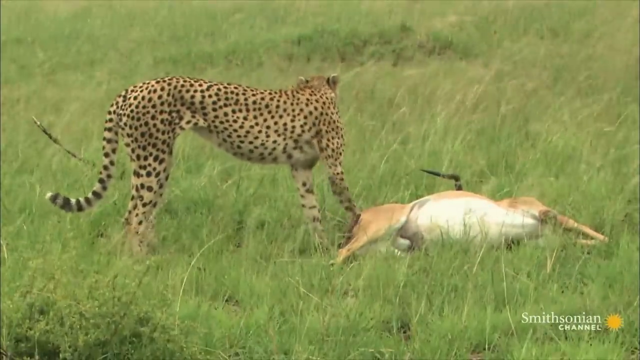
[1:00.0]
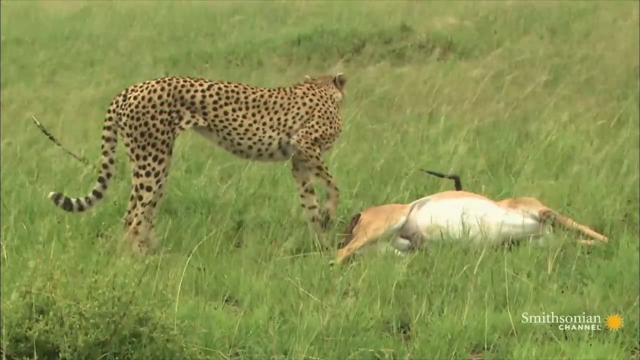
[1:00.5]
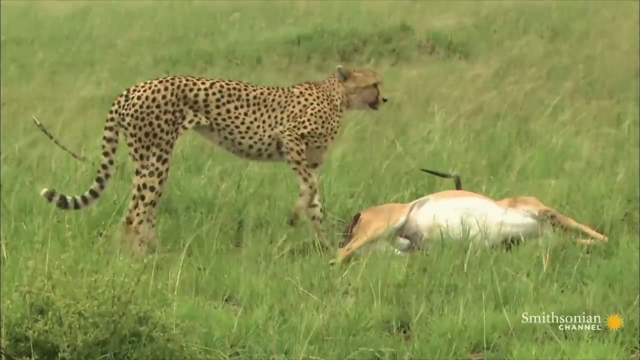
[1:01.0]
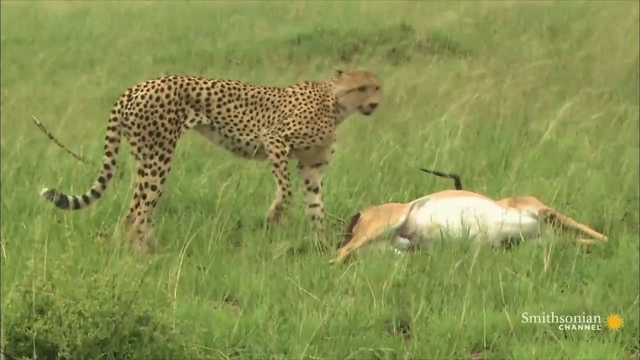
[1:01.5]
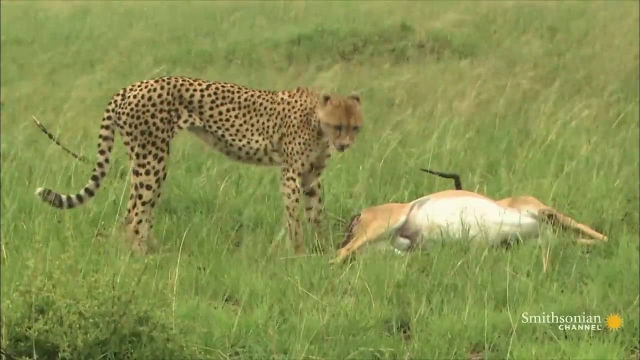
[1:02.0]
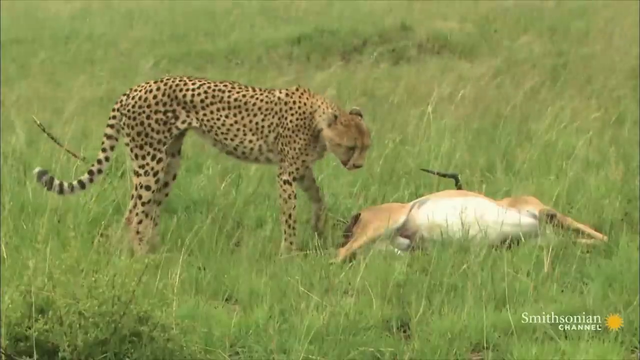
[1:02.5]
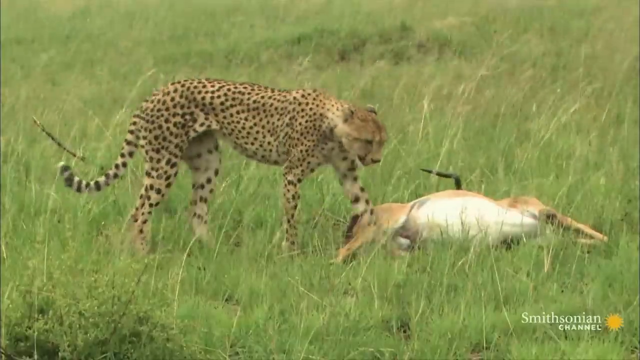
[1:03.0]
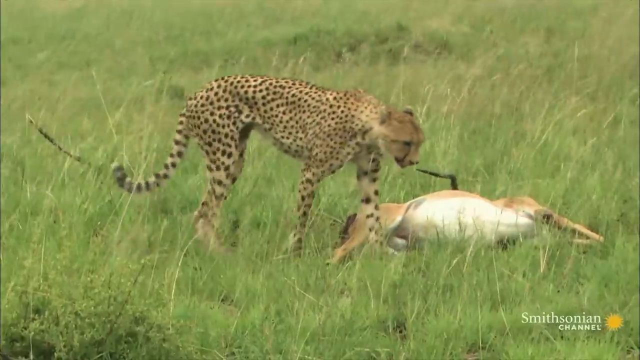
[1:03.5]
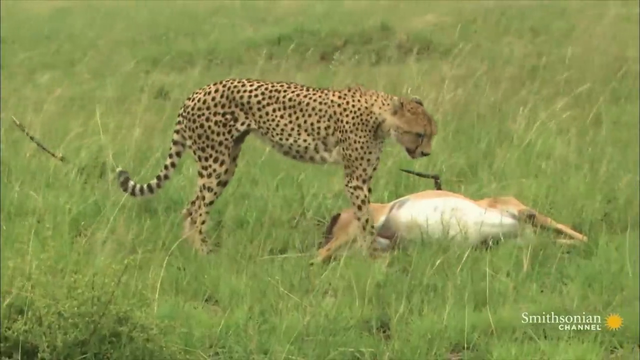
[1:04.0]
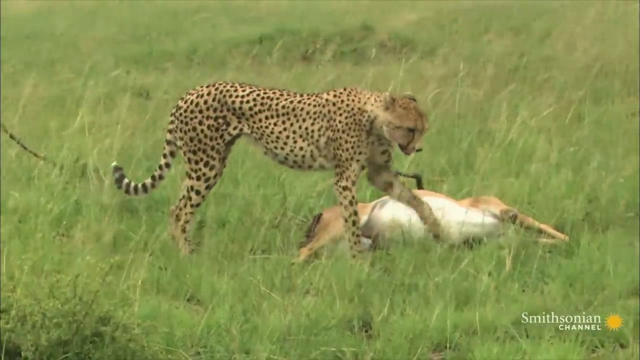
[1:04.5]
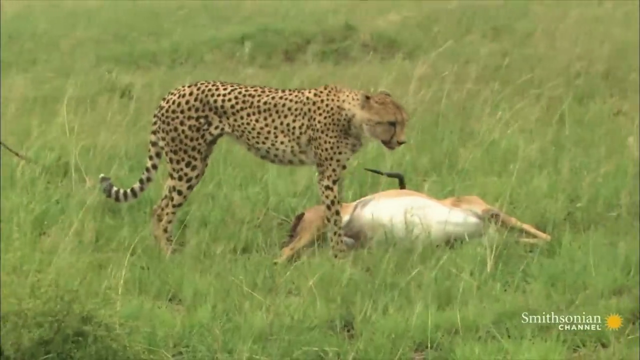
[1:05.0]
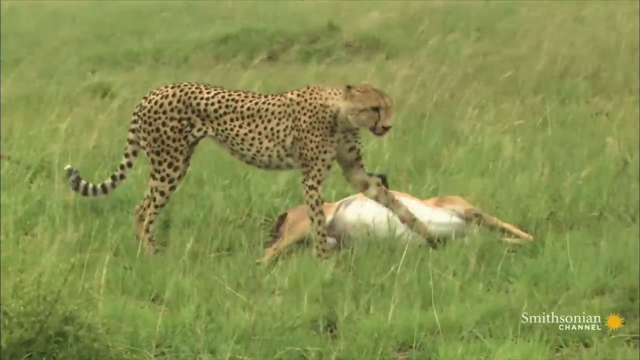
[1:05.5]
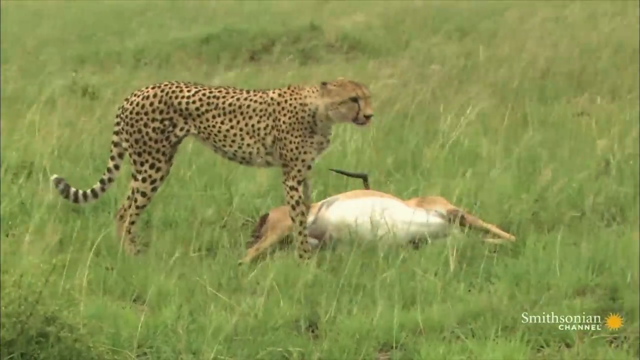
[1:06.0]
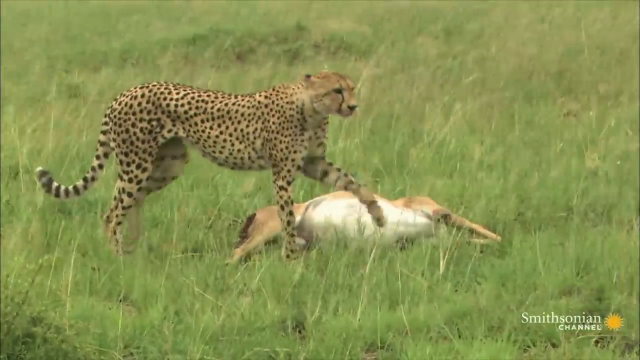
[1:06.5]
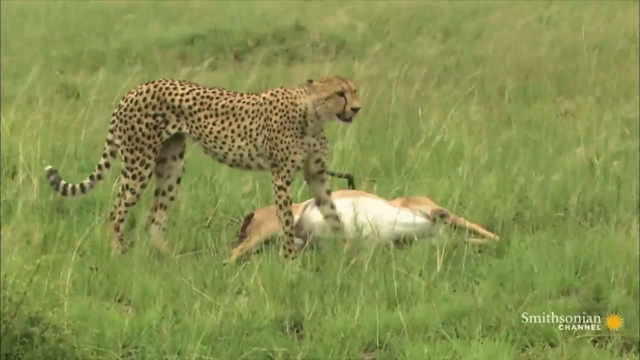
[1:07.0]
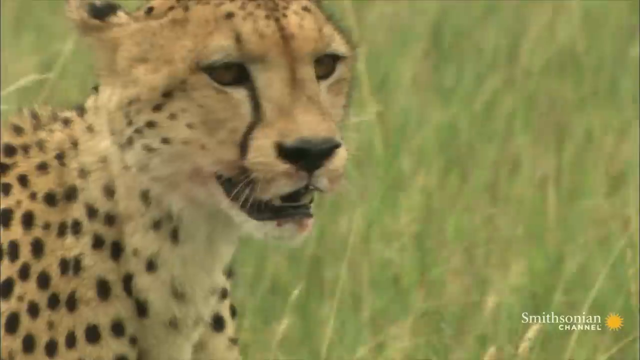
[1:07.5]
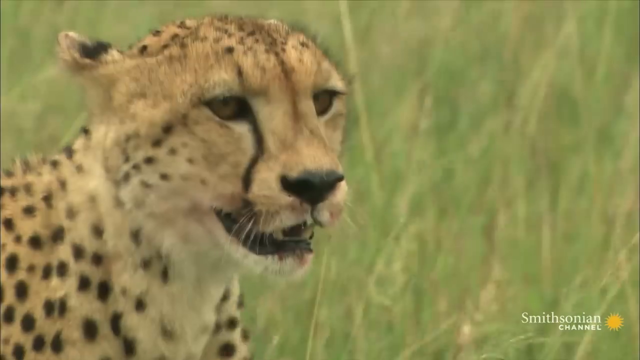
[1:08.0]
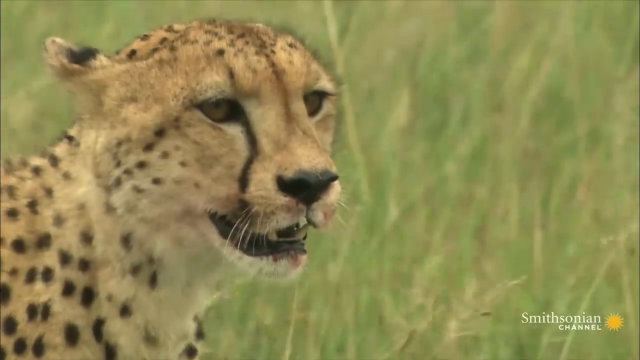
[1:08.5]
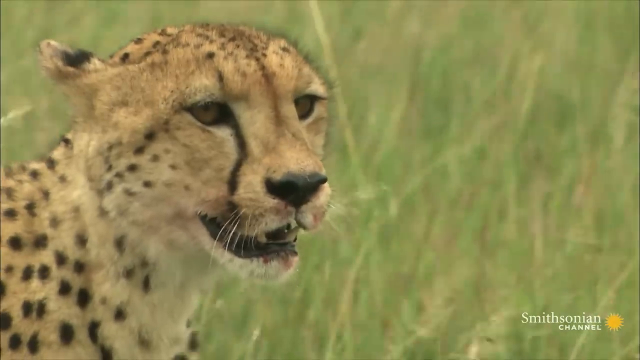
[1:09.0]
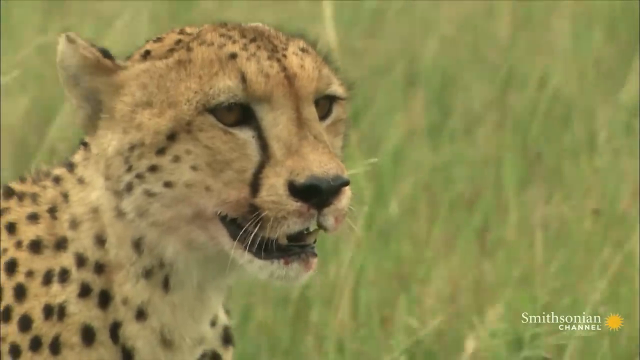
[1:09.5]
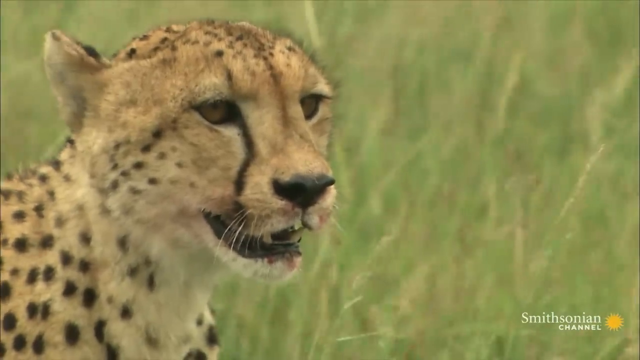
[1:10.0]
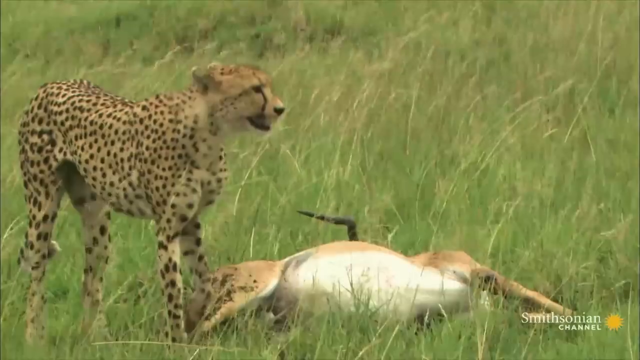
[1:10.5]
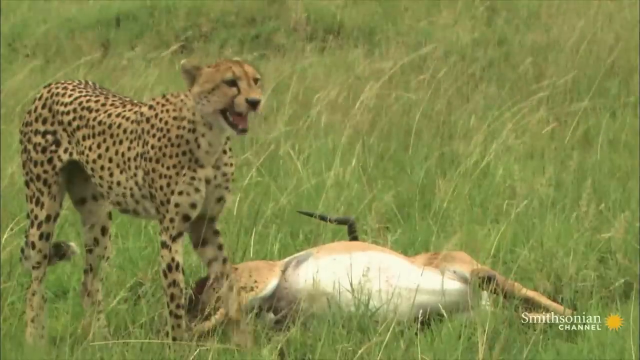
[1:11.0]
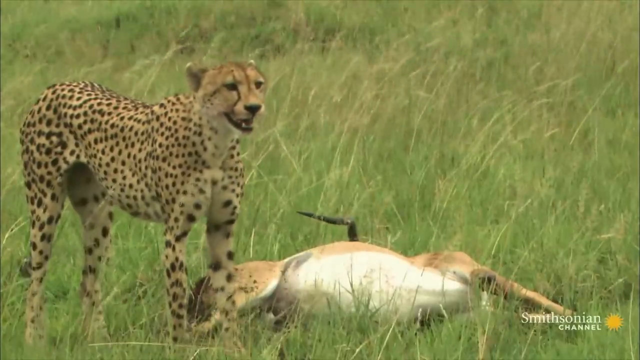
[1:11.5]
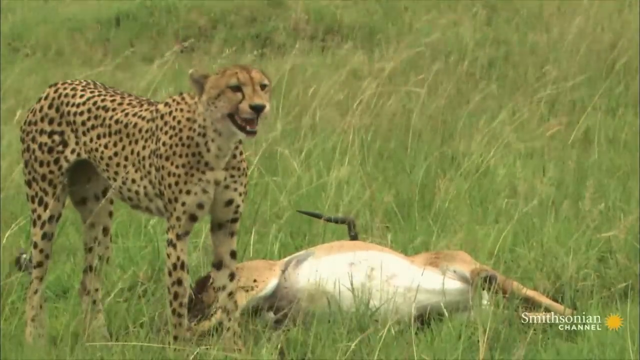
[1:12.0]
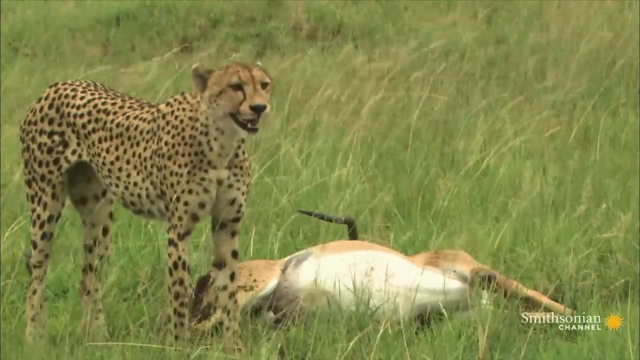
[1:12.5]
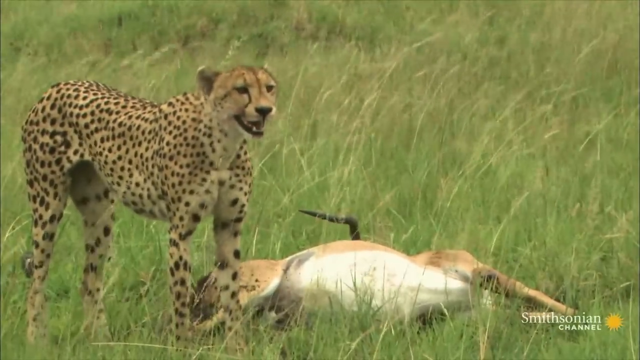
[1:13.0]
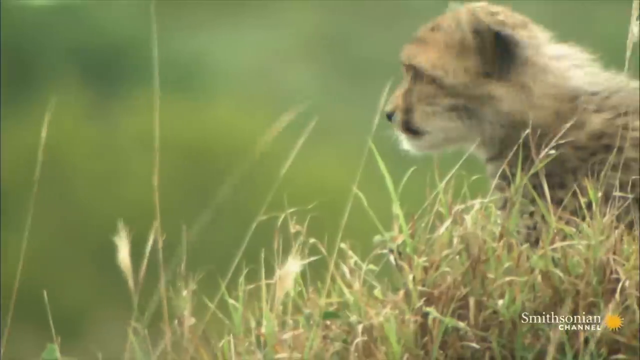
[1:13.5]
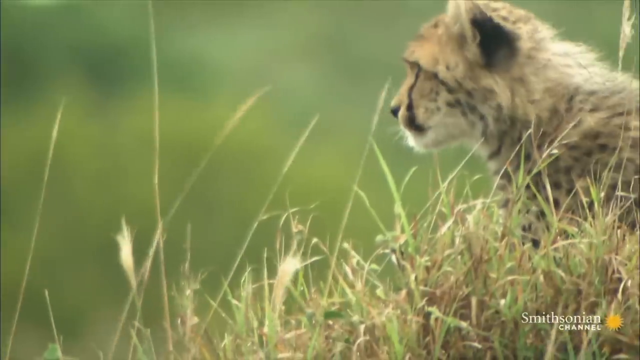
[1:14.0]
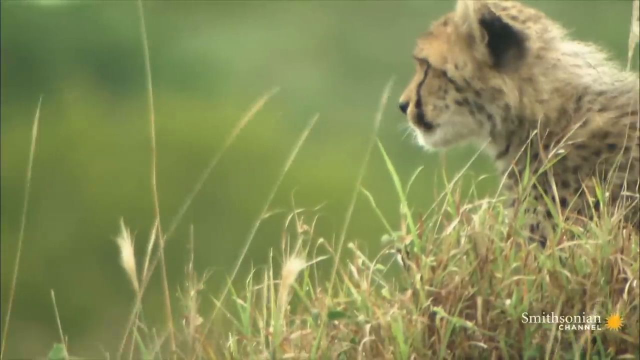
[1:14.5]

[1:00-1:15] The mother cheetah stands above the prey it has killed, still pawing at the grass. The grass is high and it is still a windy day. The cheetah is shown much more clearly because it is more still; it is lean and tall. After pawing the ground, it starts calling out to what look like its babies. Blood is visible around its mouth from killing the impala. At the very end, a baby cheetah appears and, after the mother calls out, looks quickly toward the sound of its mother's voice. There are essentially two different scenes.